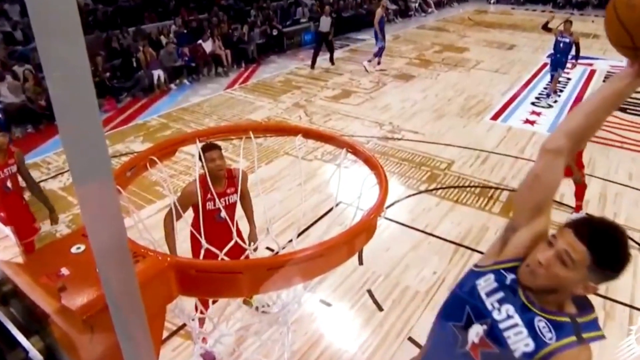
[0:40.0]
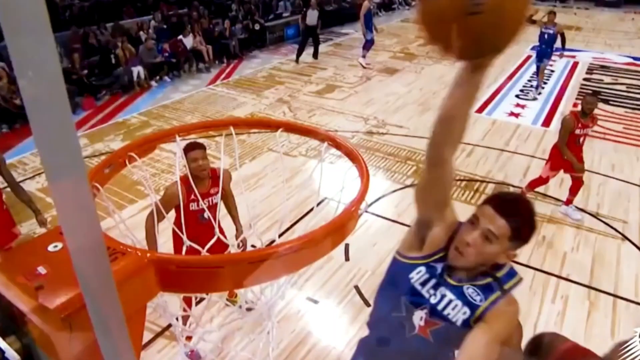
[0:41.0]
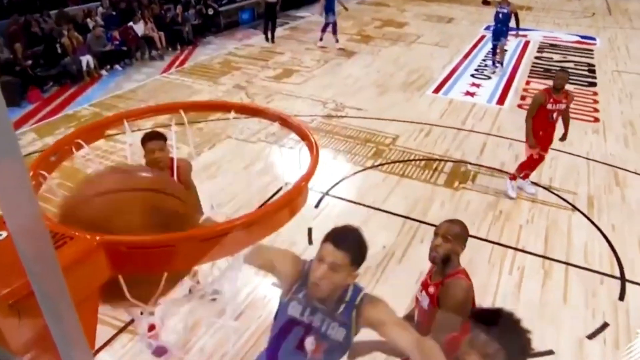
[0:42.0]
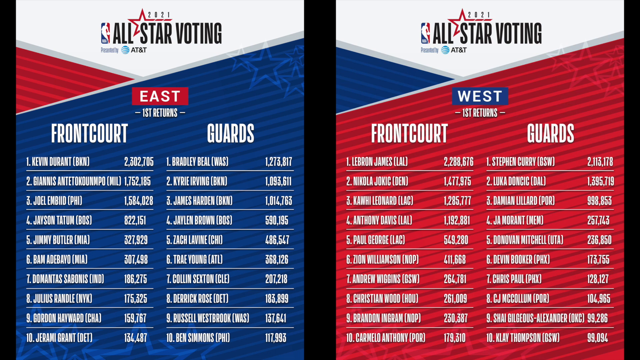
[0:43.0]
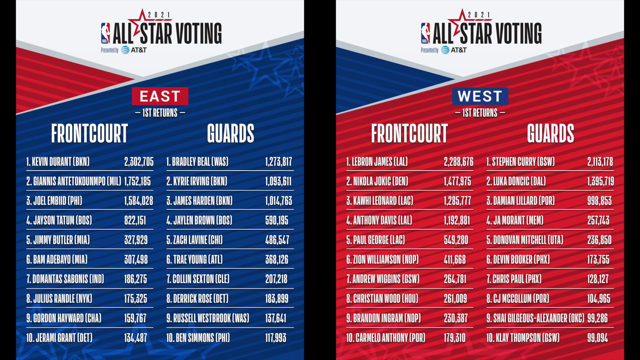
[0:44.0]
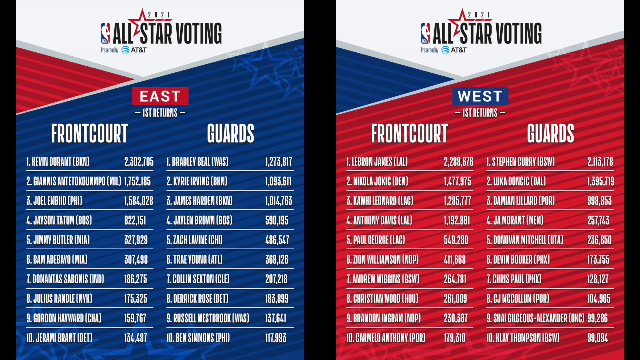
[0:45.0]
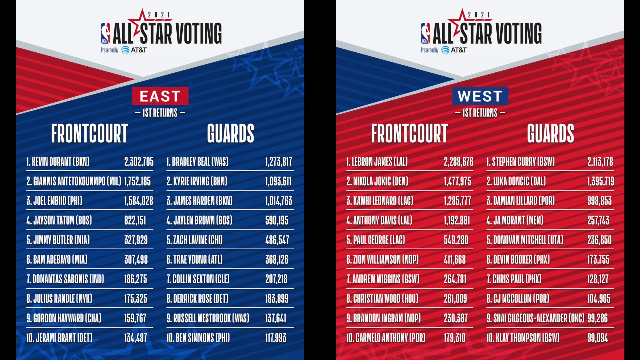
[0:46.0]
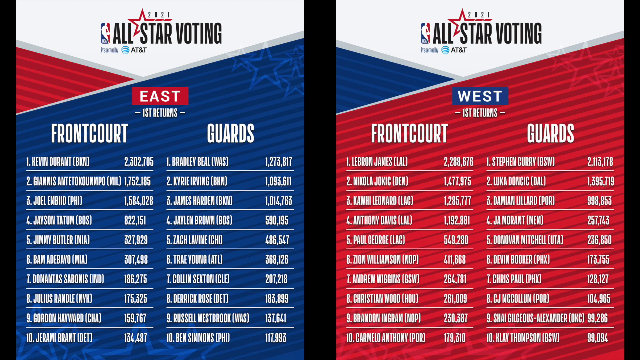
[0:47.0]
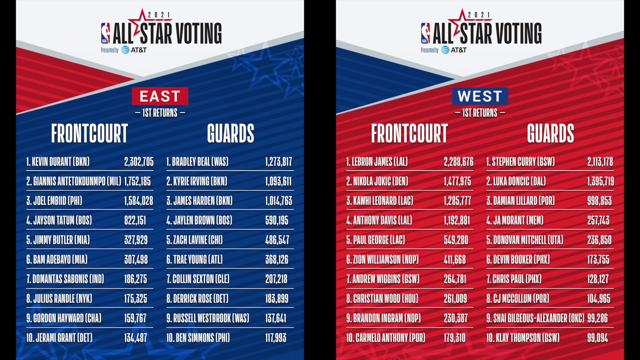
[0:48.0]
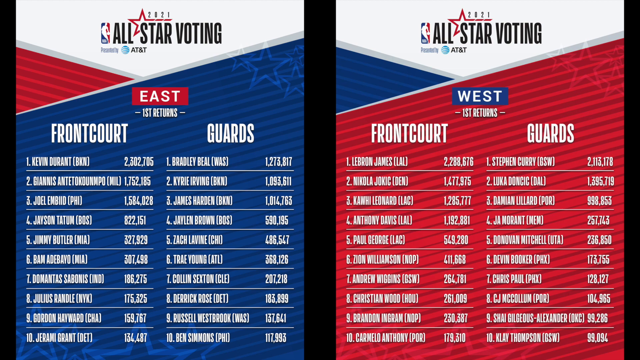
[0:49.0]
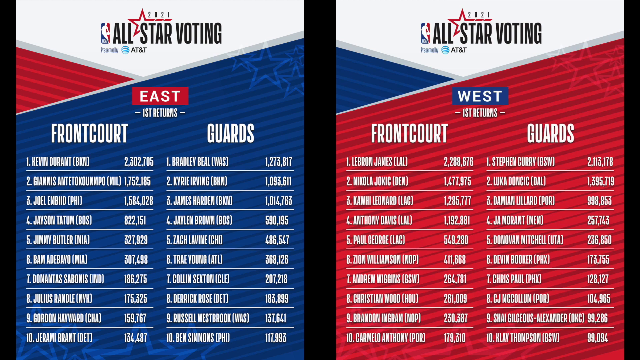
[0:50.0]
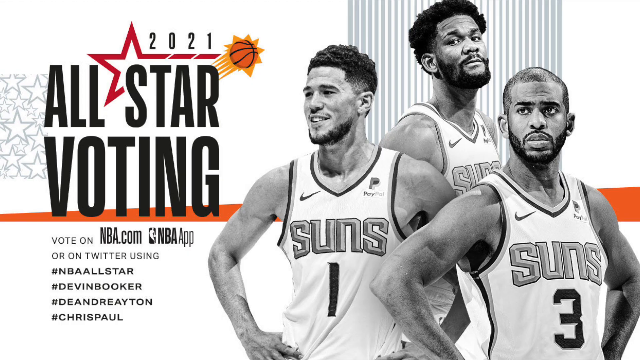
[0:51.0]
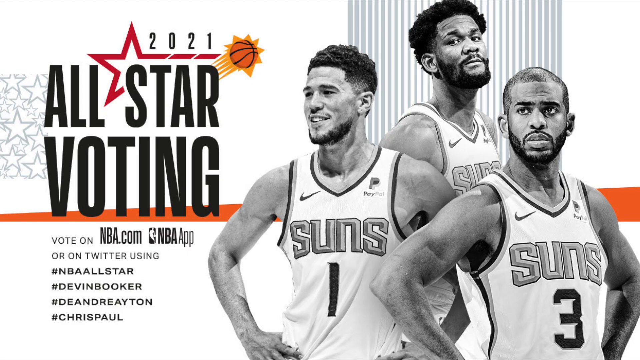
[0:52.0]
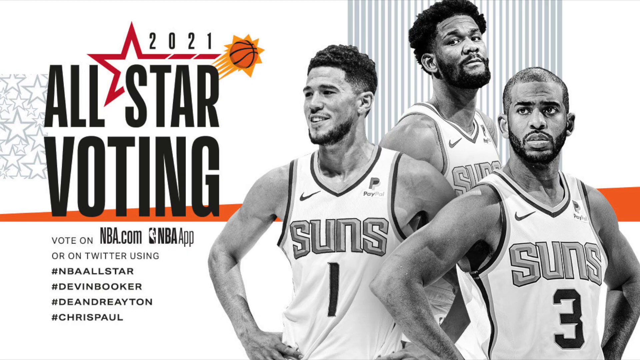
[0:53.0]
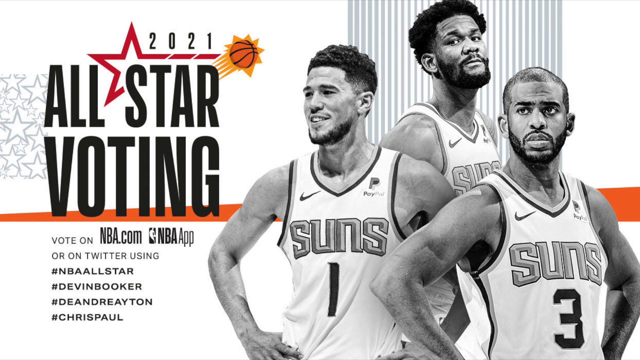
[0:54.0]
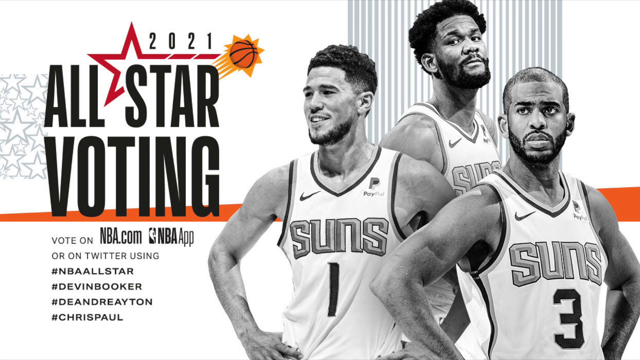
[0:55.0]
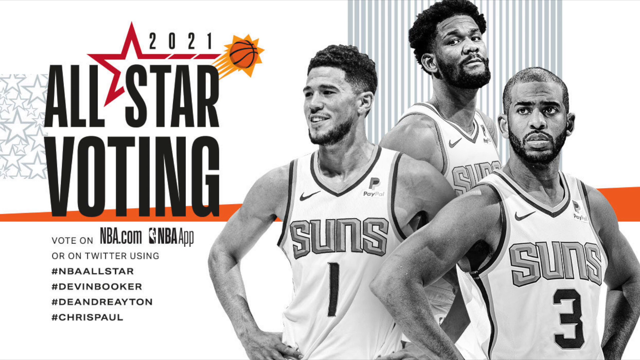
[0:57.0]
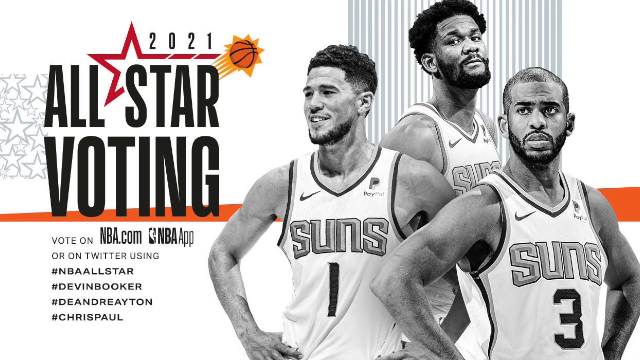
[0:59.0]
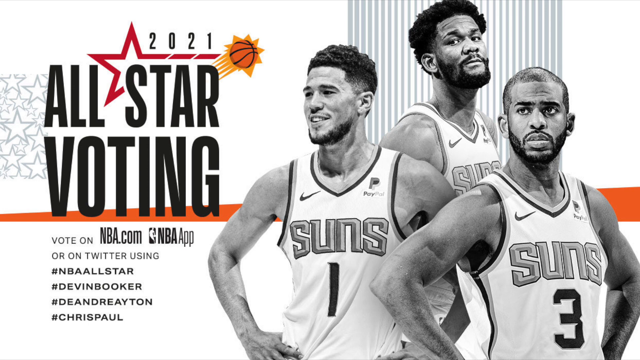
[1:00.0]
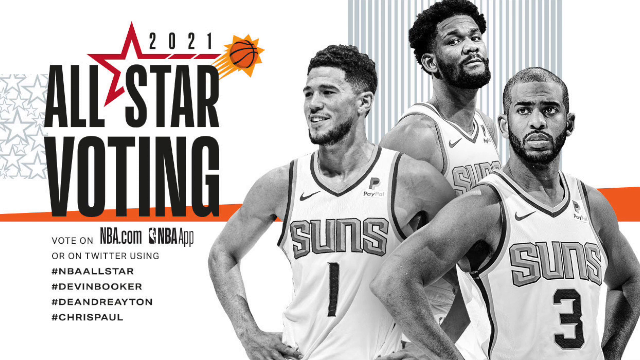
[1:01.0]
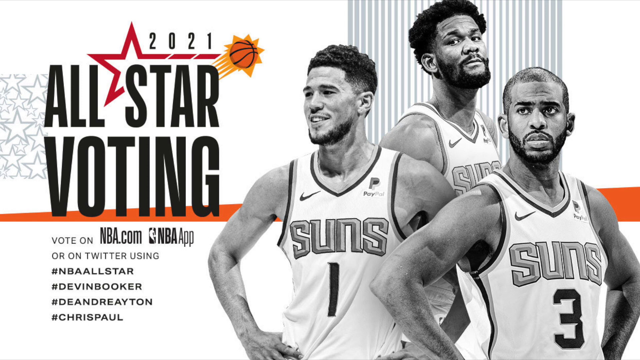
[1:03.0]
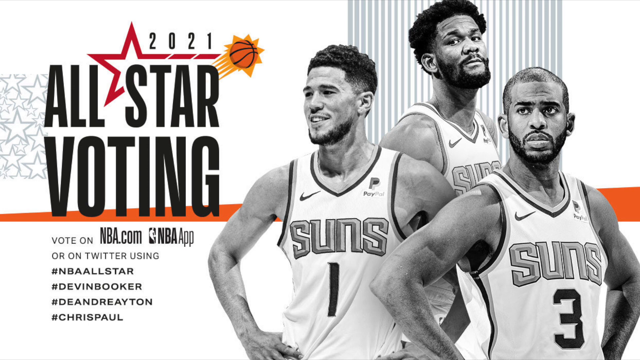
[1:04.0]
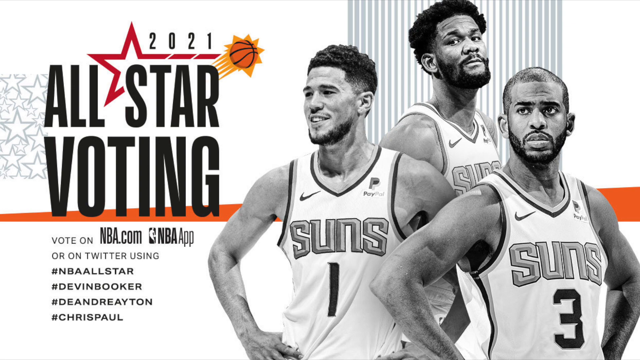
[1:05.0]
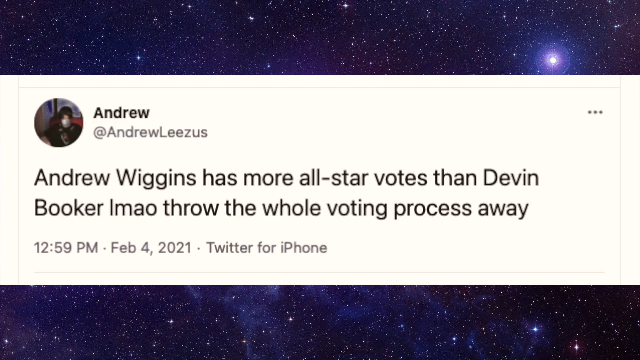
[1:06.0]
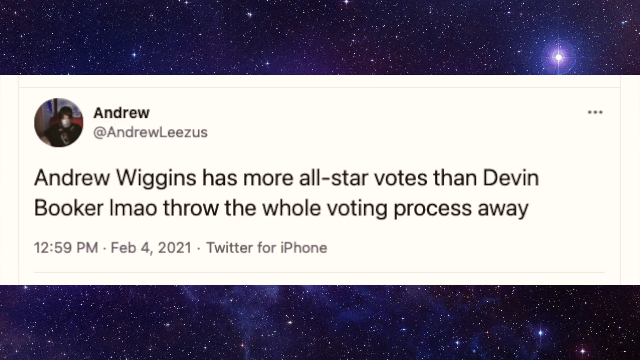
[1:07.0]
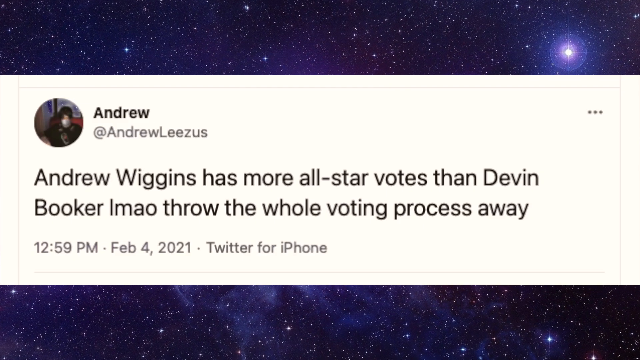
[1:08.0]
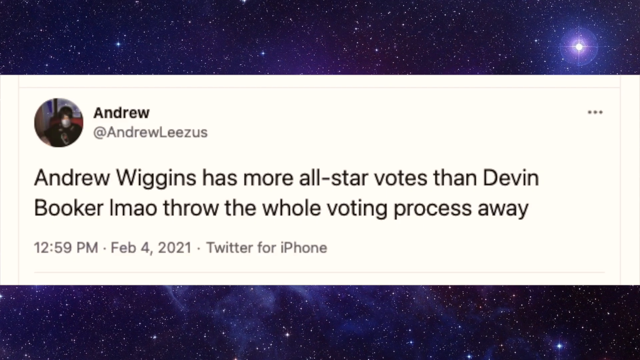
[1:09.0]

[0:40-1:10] A basketball highlight shows five players wearing red or blue, and a player in blue dunks the ball. The video then transitions to NBA All-Star voting comparing the Eastern Conference to the Western Conference, listing player names and how many votes each has. The categories are divided into frontcourt and guards, with names such as LeBron James, Steph Curry, Kawhi Leonard, Giannis Antetokounmpo, Paul George, Chris Paul and Devin Booker. Next is an image with a white background and three Phoenix Suns players on the right, wearing the team's white kit; two wear numbers one and three, and the third player's number is not visible. To their left is text reading "All-Star voting 2021" along with the Phoenix Suns symbol. Finally, the video transitions to a tweet by someone named Andrew saying "Andrew Wiggins has more All-Star votes than Devin Booker through the voting process," tweeted at 12:59 p.m. on February 4th, 2021.